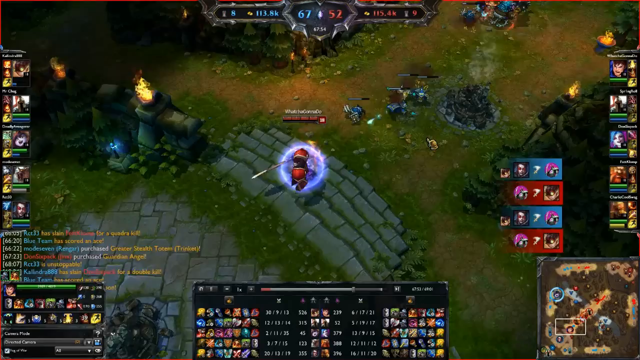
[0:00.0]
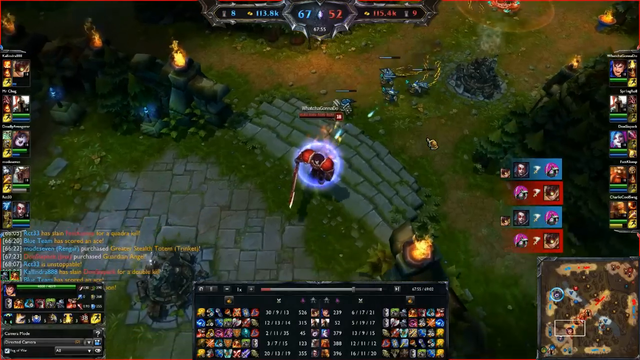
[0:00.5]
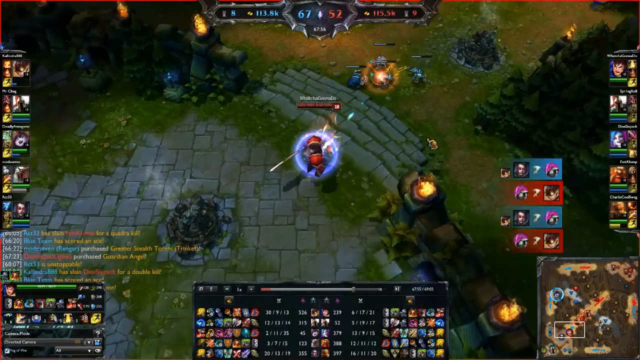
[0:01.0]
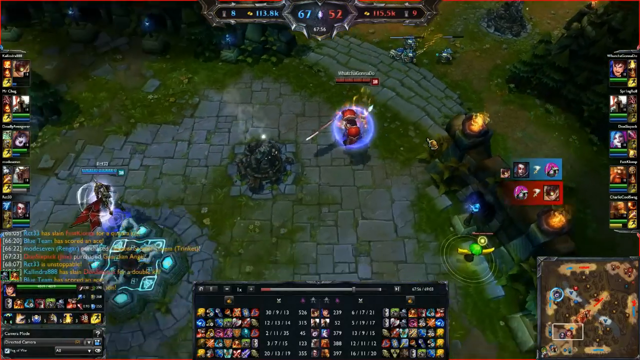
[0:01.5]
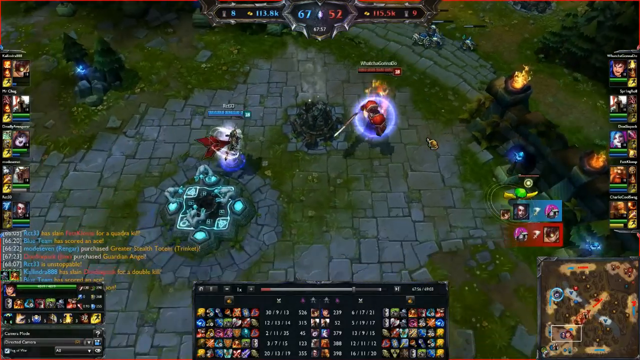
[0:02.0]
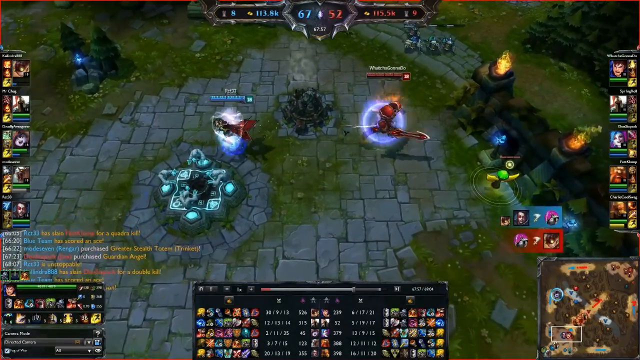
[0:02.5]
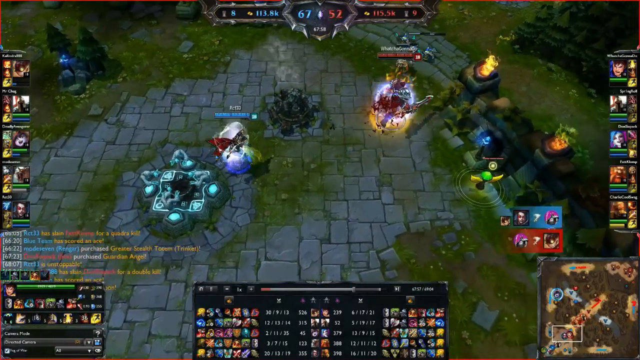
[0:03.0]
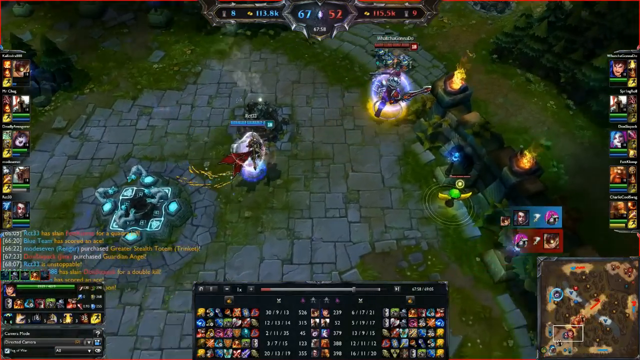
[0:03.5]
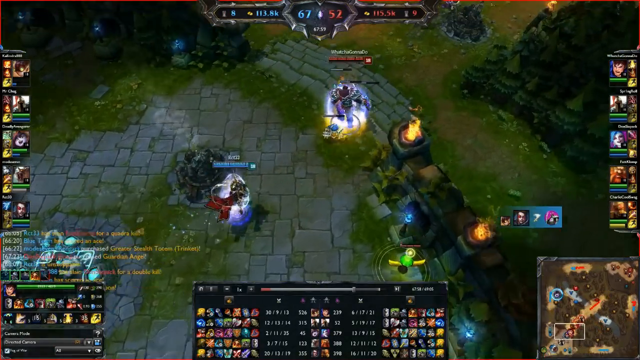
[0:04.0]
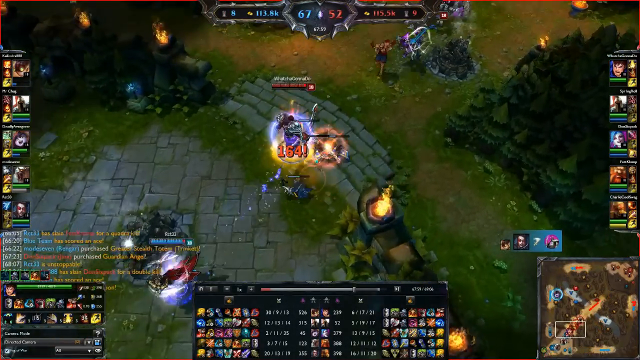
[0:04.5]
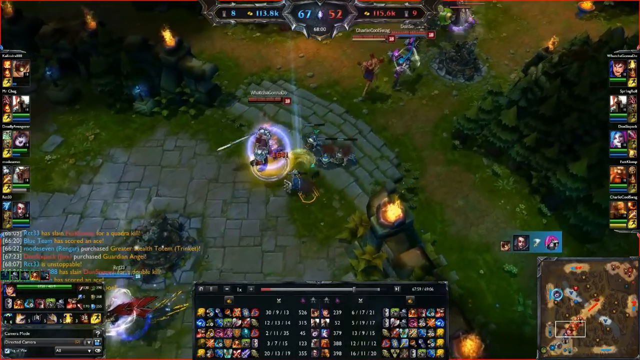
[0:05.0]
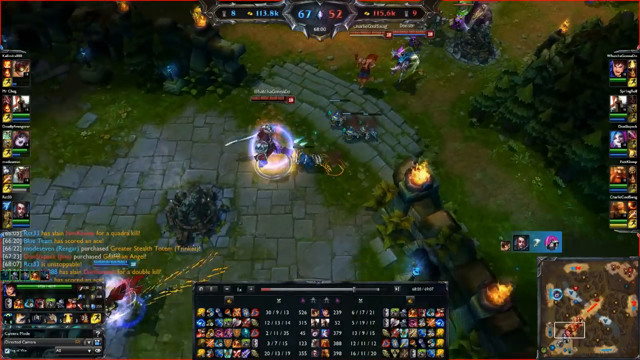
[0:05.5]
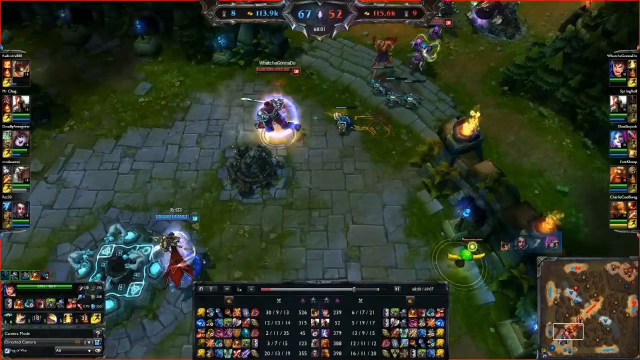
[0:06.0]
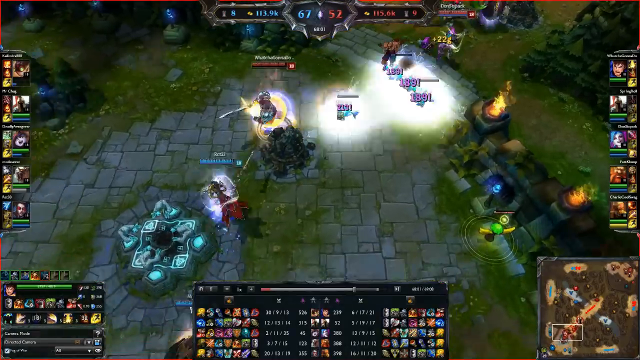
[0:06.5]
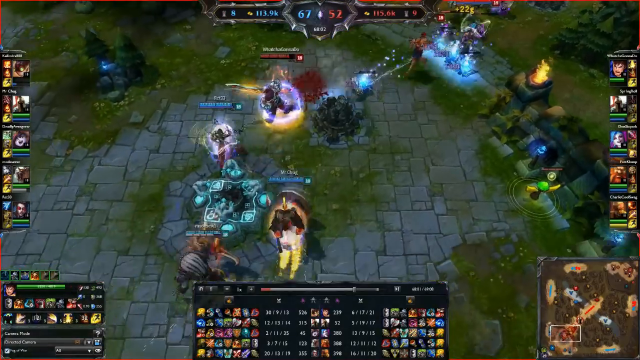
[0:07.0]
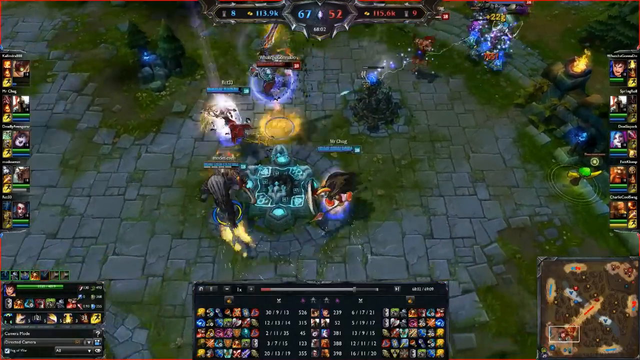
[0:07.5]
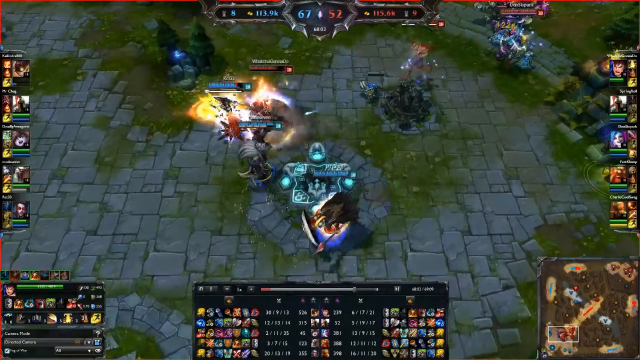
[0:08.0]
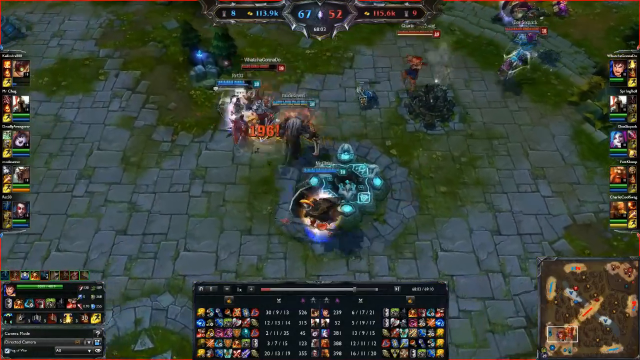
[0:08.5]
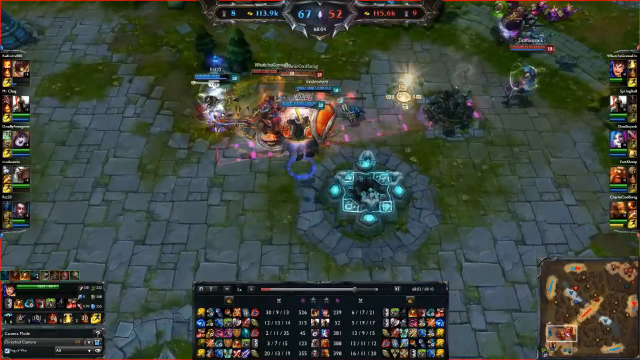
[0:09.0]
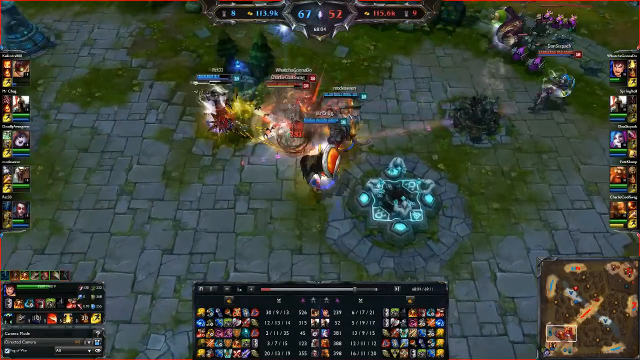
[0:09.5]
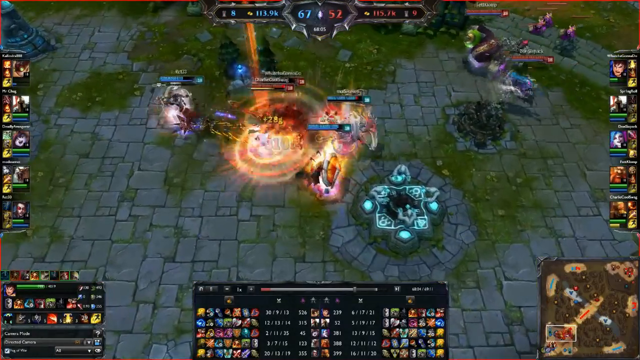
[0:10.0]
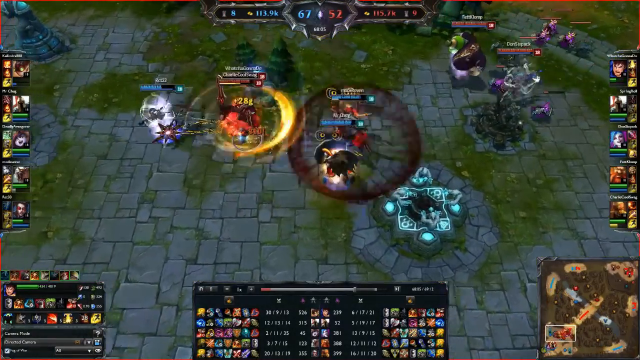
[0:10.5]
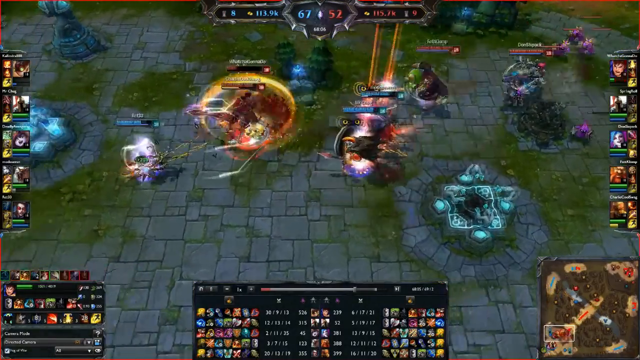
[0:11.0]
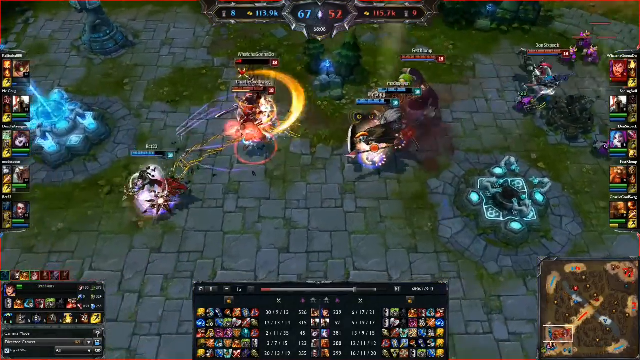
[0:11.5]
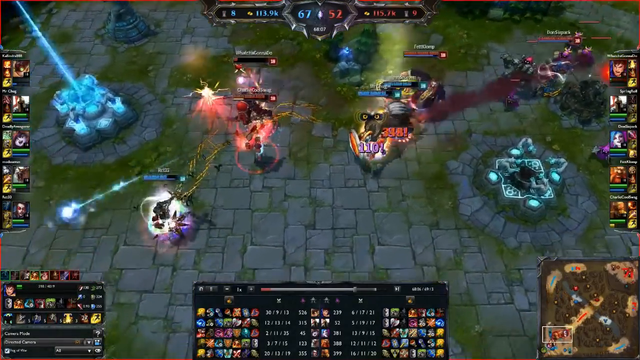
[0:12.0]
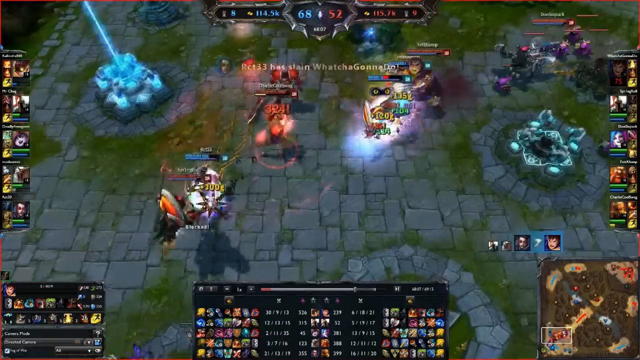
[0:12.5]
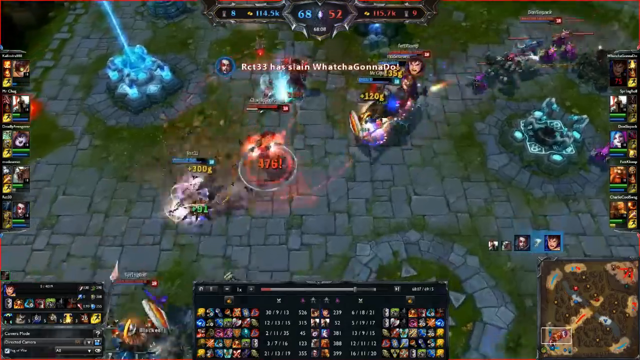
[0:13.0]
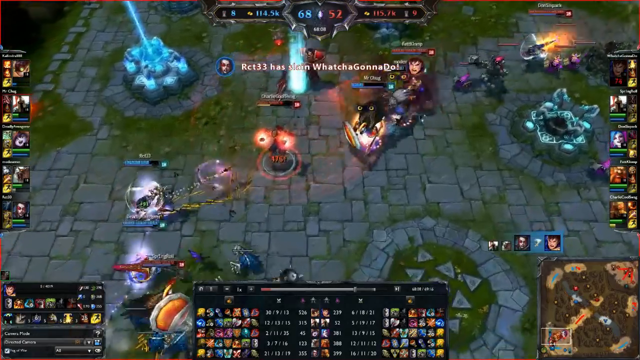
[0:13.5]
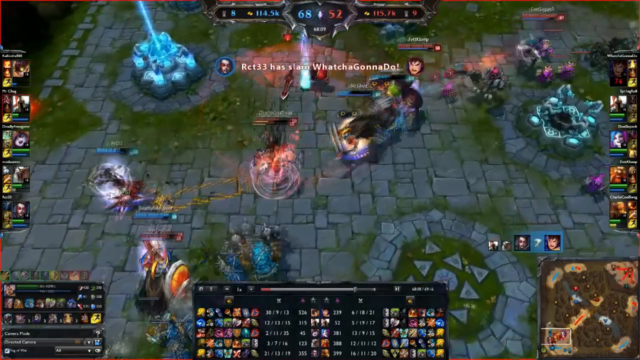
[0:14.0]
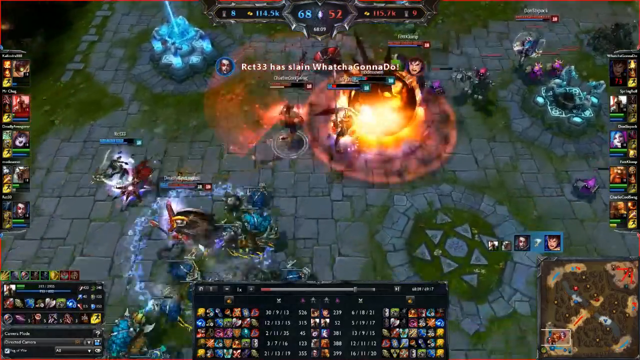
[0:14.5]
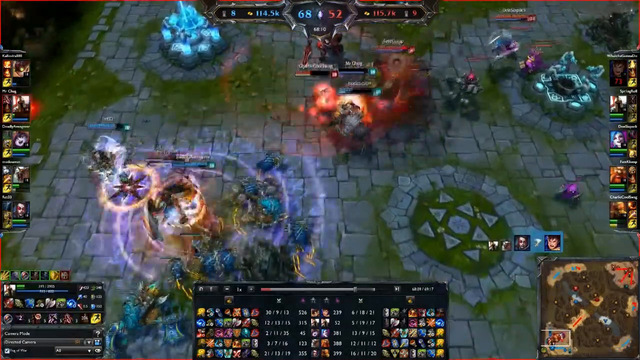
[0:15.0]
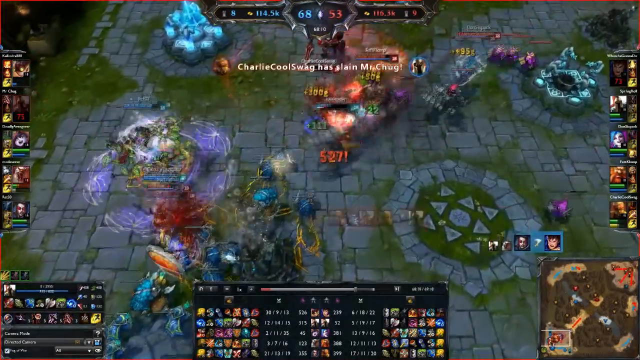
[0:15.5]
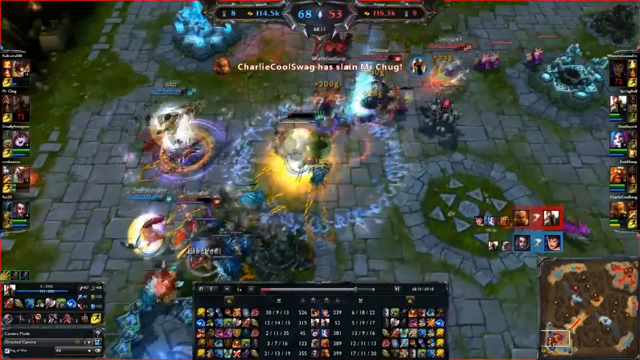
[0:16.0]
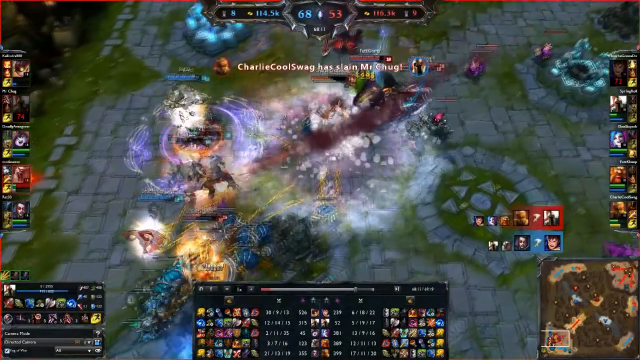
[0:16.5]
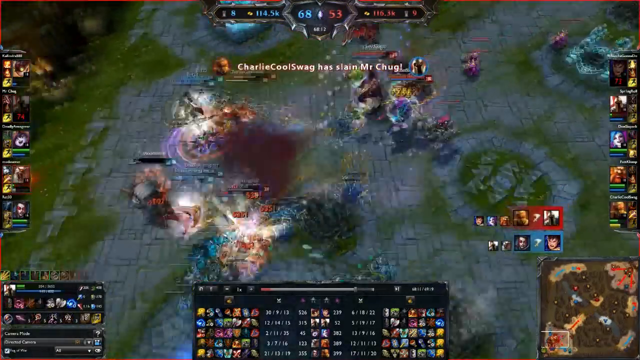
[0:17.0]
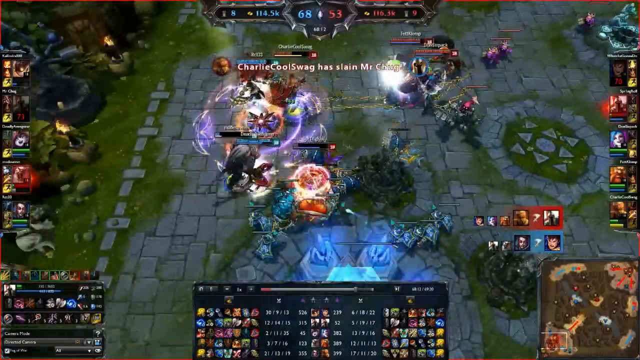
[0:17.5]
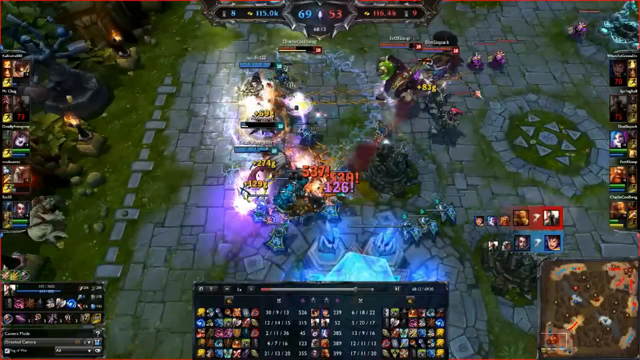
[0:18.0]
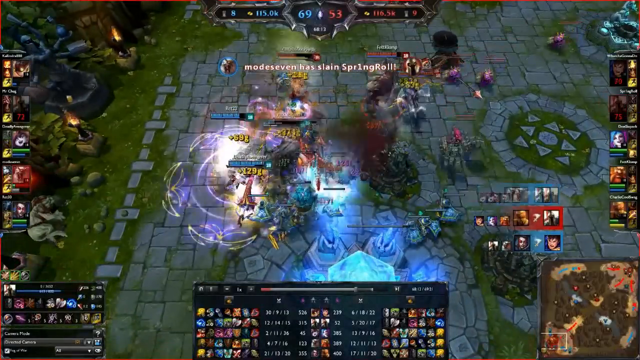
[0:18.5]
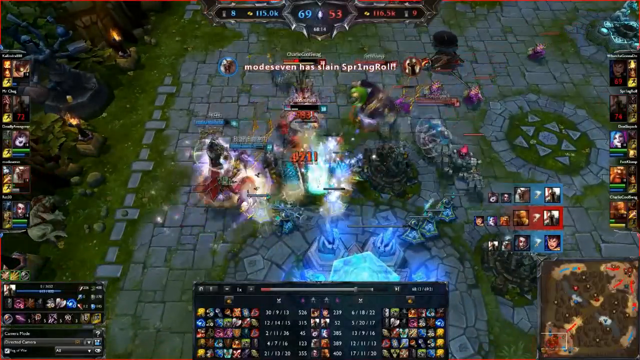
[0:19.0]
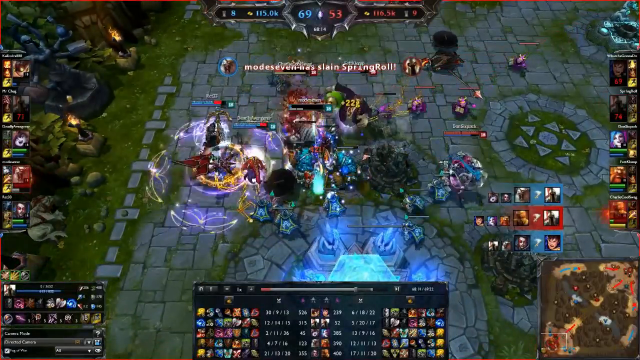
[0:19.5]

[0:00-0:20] This is a video game. Across the top there is blue on one side, something like a silver border that comes down, and dark blue on the sides. A 67 in blue is on the left side and a 52 in red is on the right side. To the left of the blue it says "113.8 K", and further left there is an 8, for how many people. The other side shows 115.4 K points and 9 lives. Below that is a timer. Down the left and right sides there is more information about the game, and across the bottom center and bottom right there is a little map. The player's character has a red helmet and a red shield, is otherwise all black, and holds a spear. There is grass all around except where he is coming from at the bottom center. Going up to the left, a little walkway turns into a wall with some torches on it. Behind him, enemies are coming toward him, and he has a little blue bubble around him. He keeps going down to the left as another enemy, surrounded in white, approaches, and they are on the concrete. He turns around and goes back to the white, and the other enemy shoots at him. Two more enemies dressed in black come from the bottom. He shoots off some sort of thing that takes life away from him. It then becomes a big melee, with all kinds of enemies fighting in a big group, and it is really hard to tell who is who.